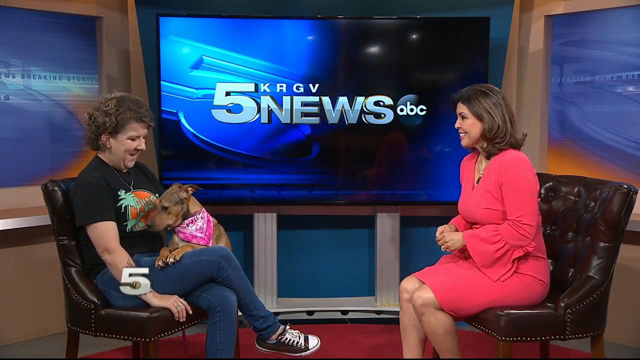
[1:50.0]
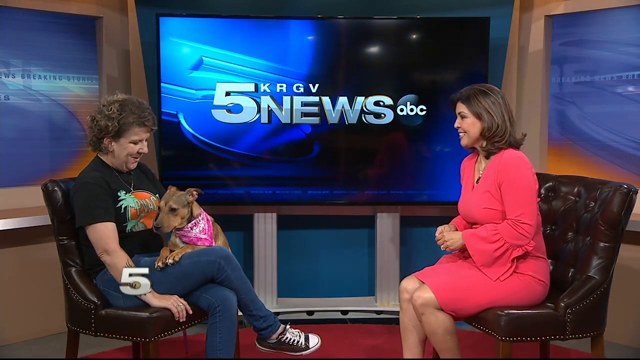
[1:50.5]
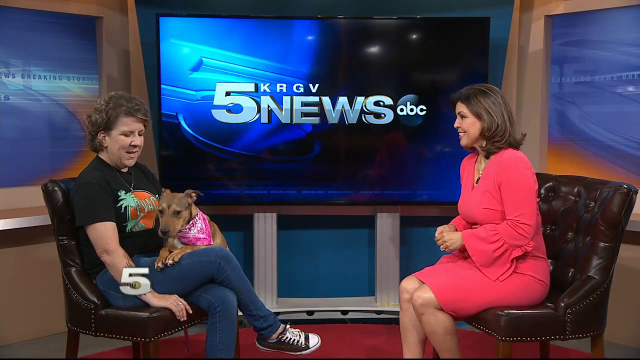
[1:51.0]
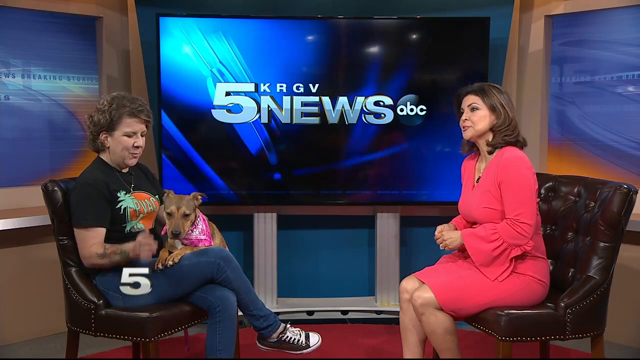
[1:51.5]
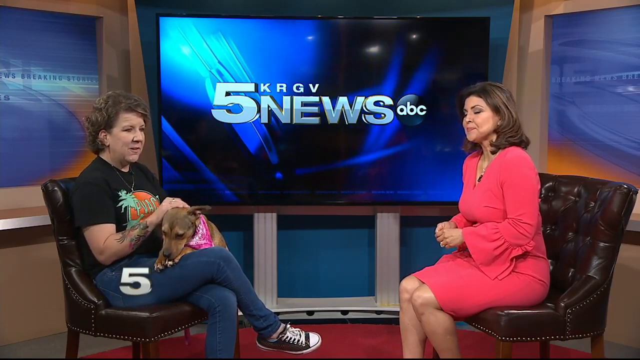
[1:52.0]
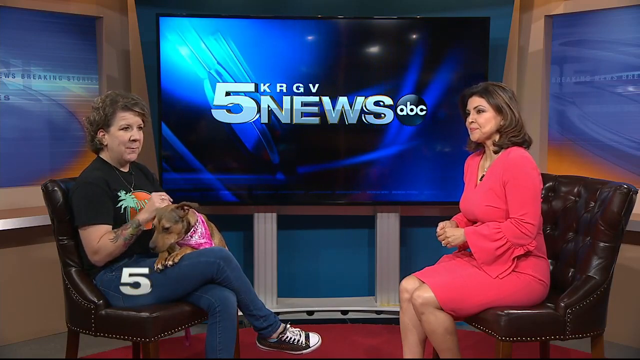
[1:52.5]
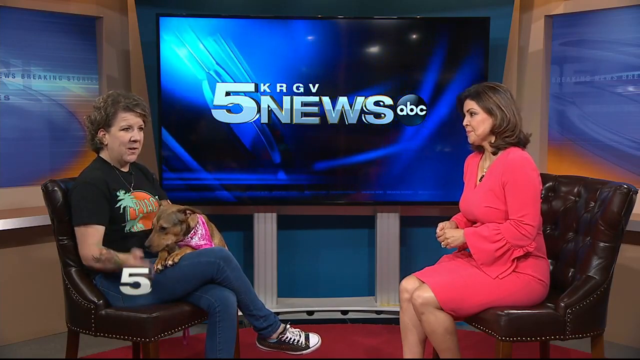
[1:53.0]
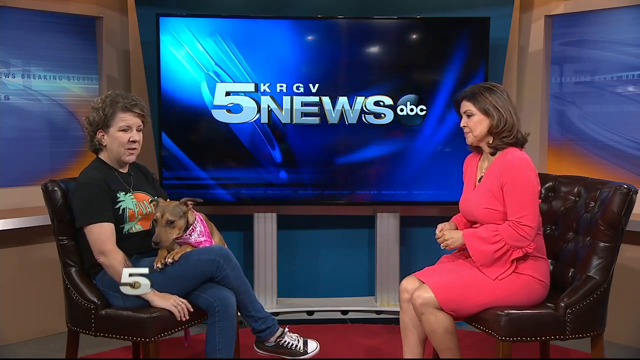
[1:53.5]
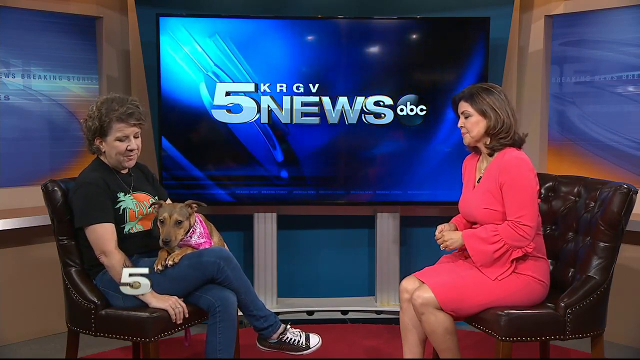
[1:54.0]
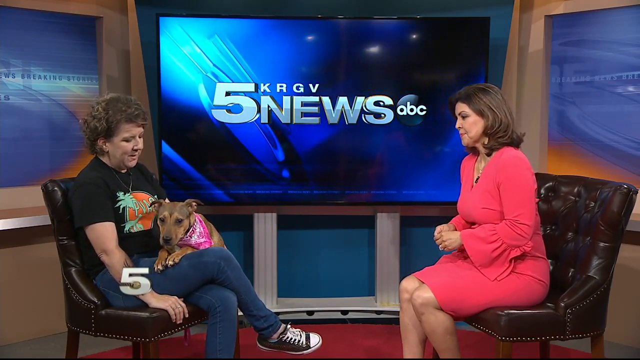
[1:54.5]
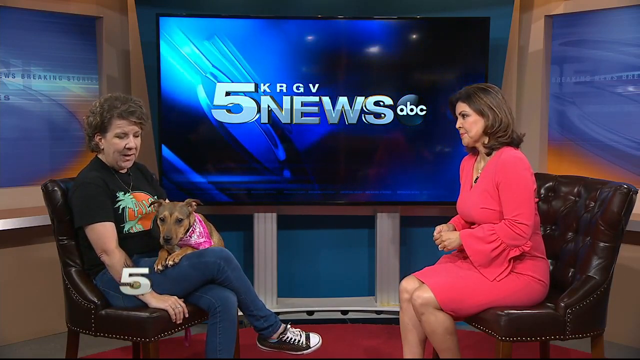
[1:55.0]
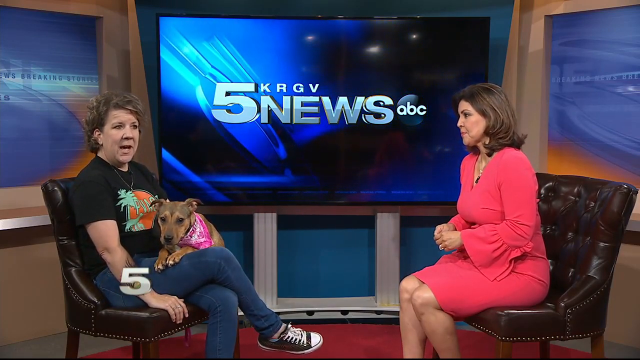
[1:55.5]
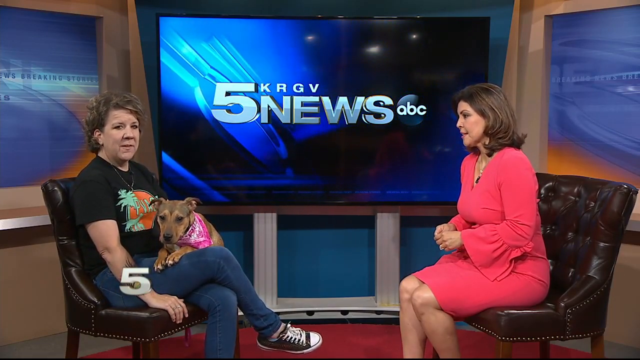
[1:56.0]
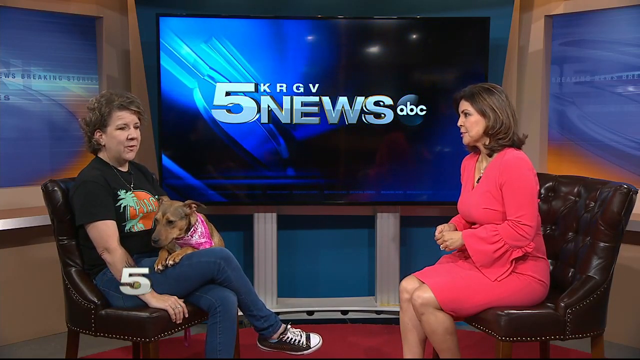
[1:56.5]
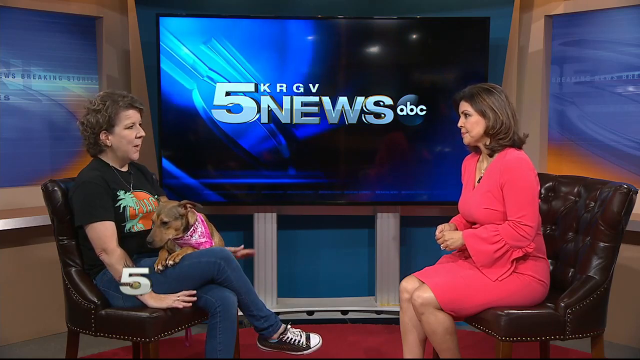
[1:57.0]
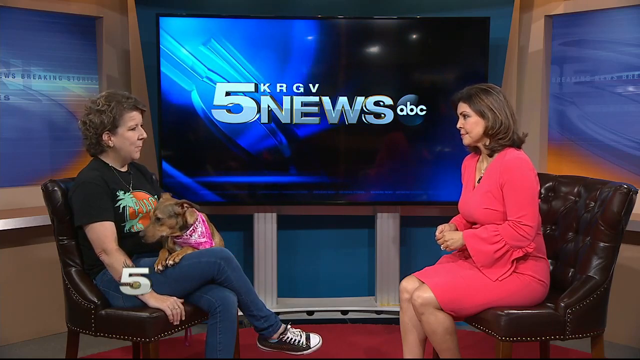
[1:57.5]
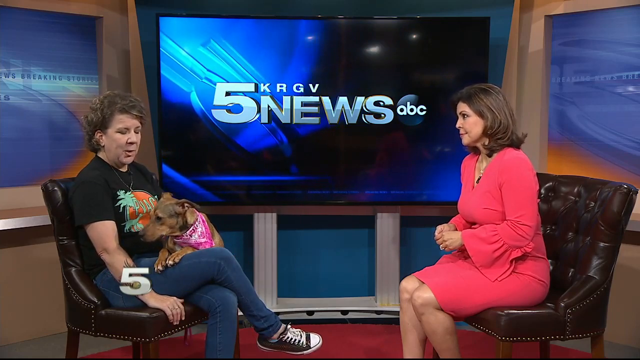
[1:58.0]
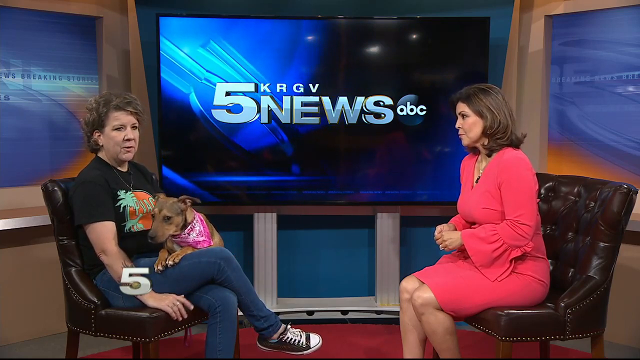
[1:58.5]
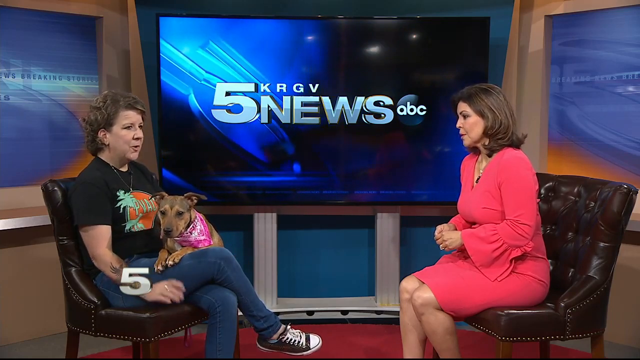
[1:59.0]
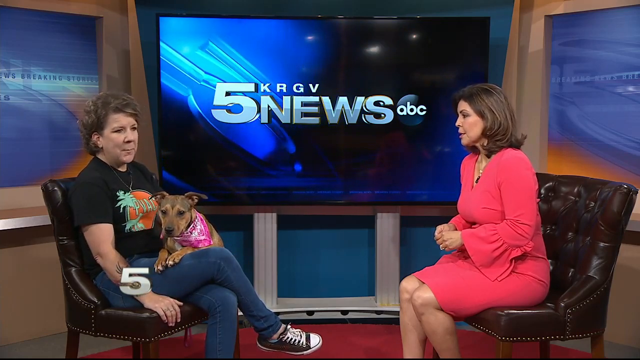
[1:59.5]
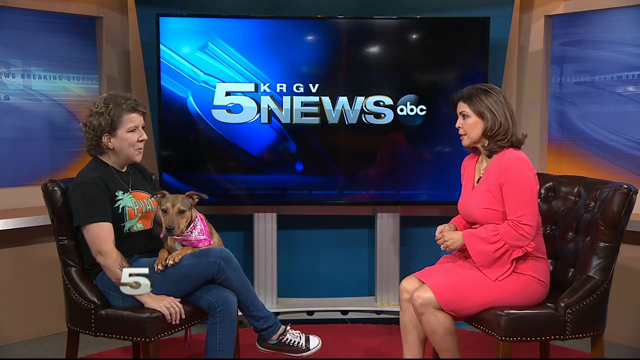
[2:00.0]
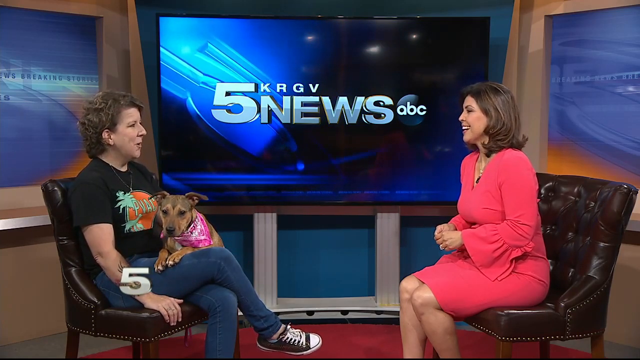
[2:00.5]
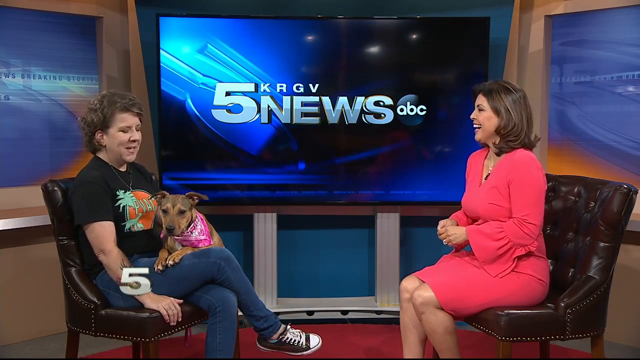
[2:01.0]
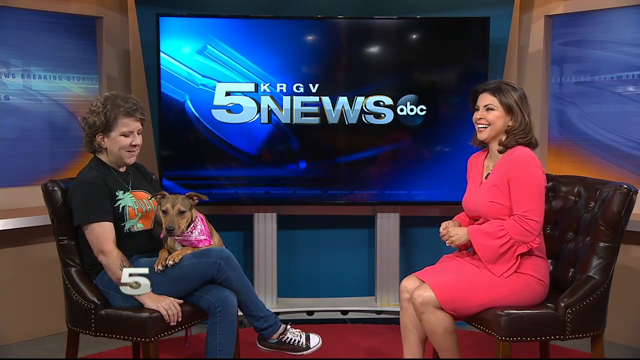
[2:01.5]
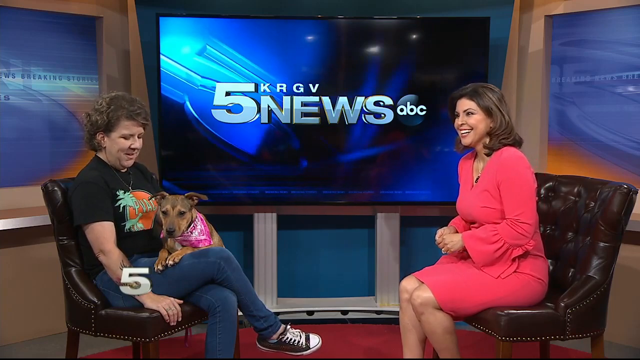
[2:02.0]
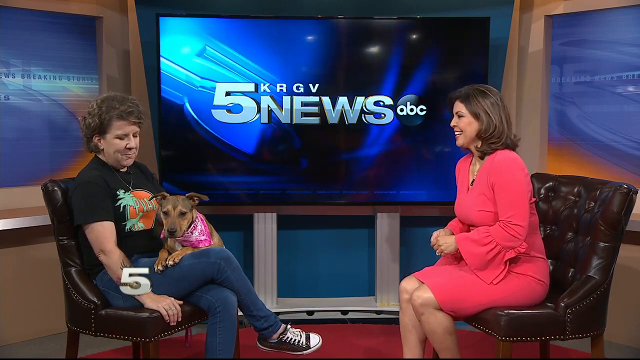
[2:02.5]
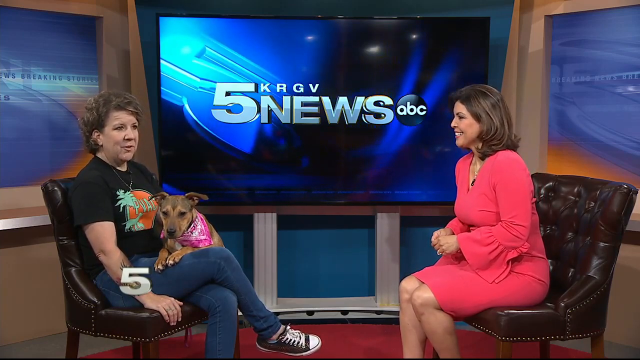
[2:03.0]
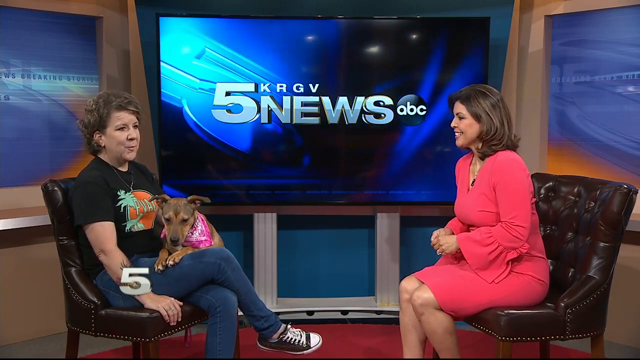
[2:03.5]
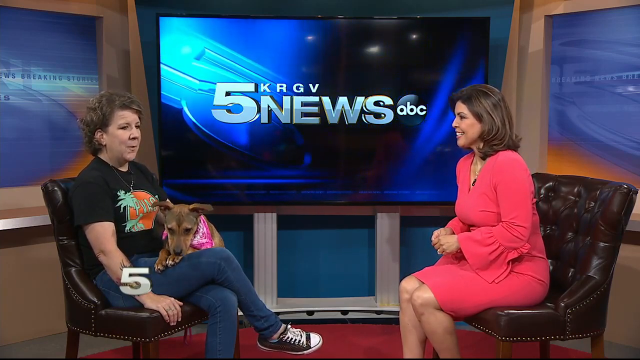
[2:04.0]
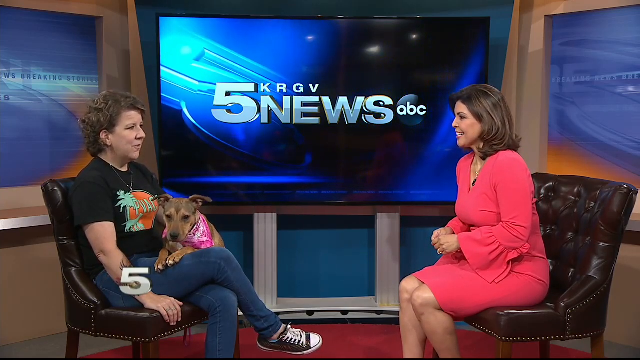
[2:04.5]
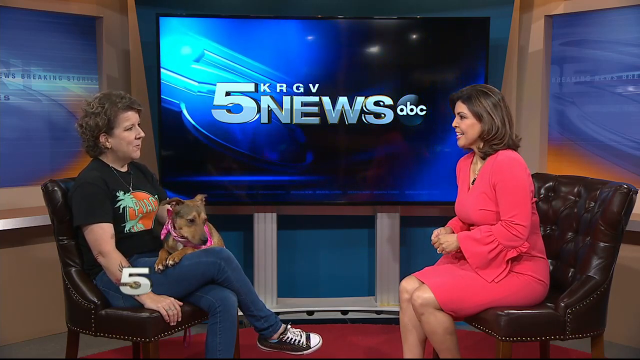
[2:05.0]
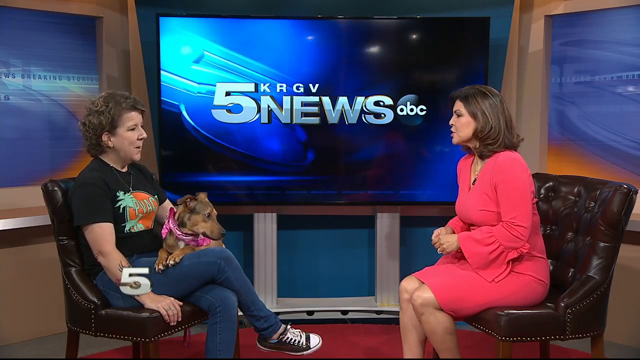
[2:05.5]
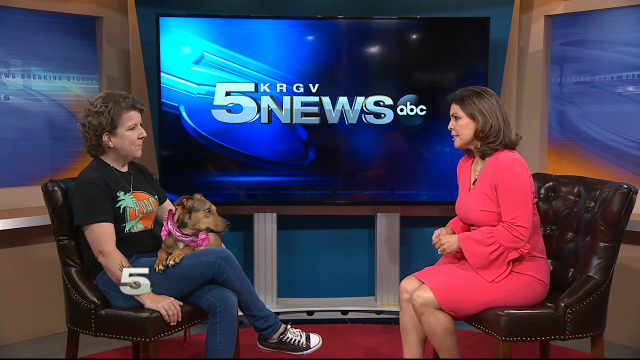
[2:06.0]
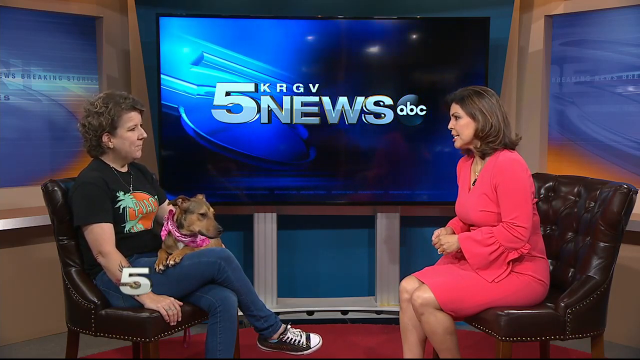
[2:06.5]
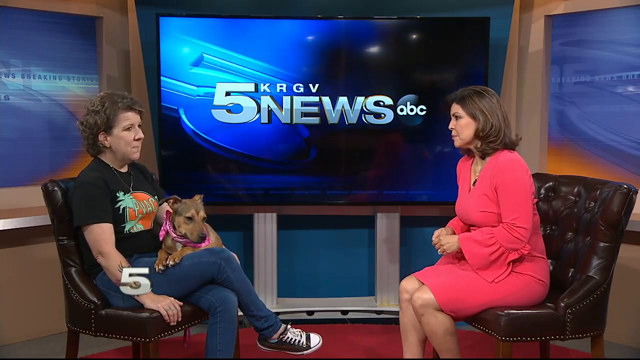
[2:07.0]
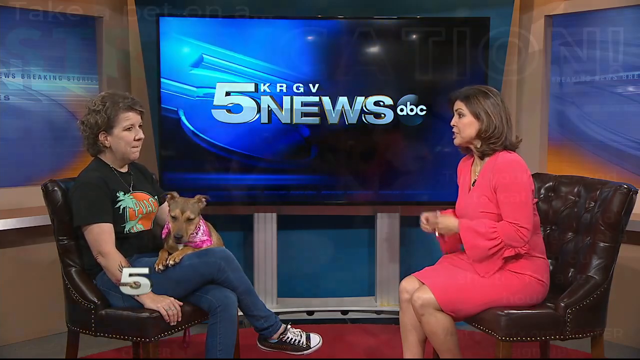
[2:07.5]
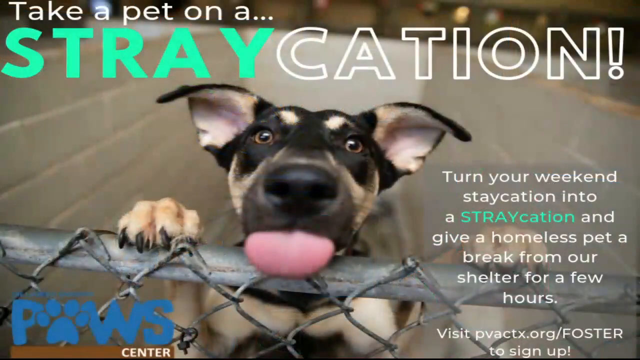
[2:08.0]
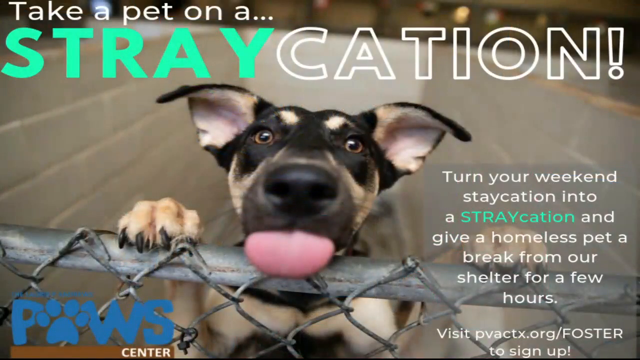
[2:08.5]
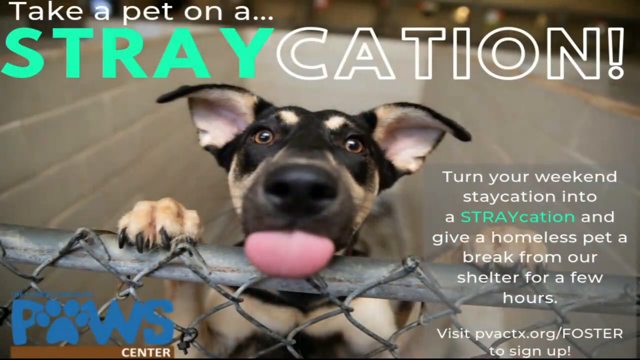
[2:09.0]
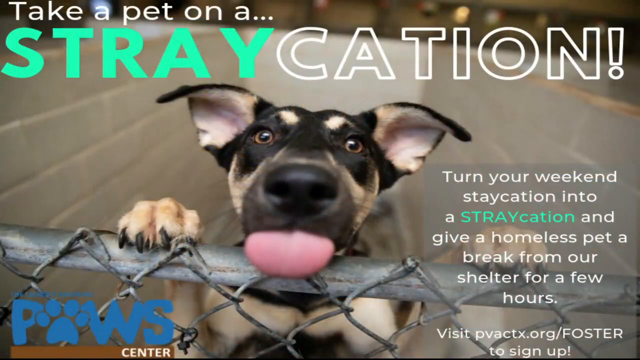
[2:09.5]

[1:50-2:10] The dog owner pets the dog's head with her right hand. The dog is relaxed, looking back and forth between the owner and the audience, while the news anchor looks at the owner's face as she talks and the owner looks out toward the crowd rather than at the anchor. The dog looks at the news anchor, and the video transitions to a new ad that begins with "take a pet on a straycation, turn your weekend staycation into a straycation, and give a homeless pet a break from our shelter for a few hours." It shows a dog with its tongue out and two paws up against a fence, as if about to climb or jump. In the bottom right of the screen is "visit pvactx.org/foster".